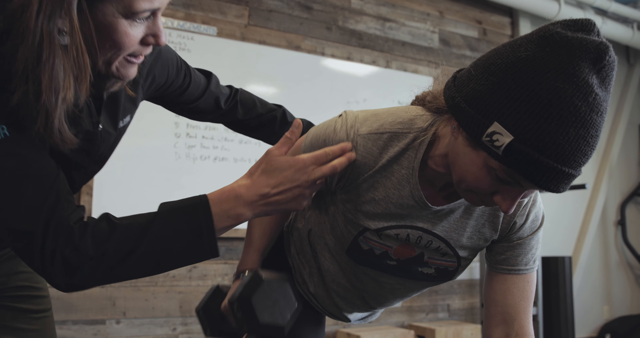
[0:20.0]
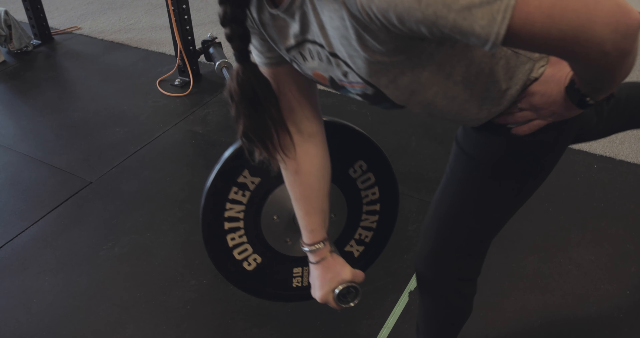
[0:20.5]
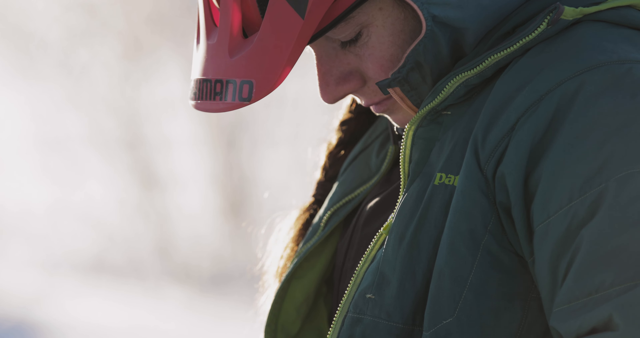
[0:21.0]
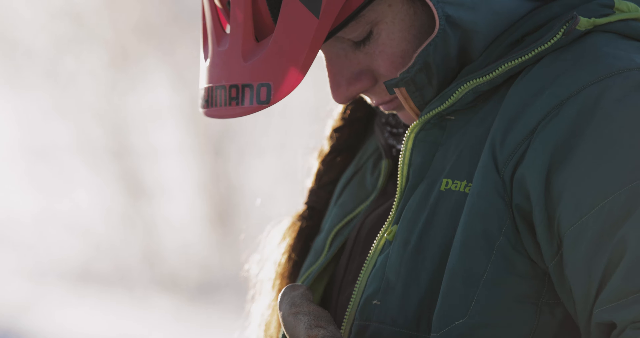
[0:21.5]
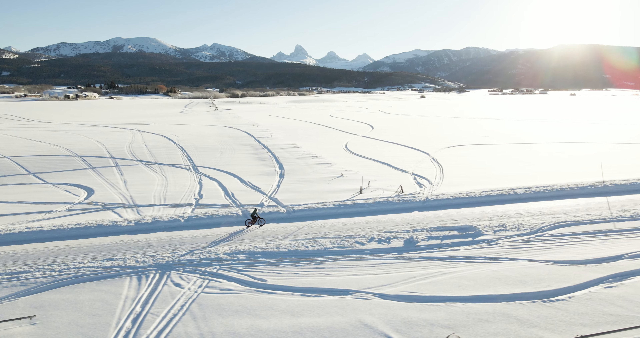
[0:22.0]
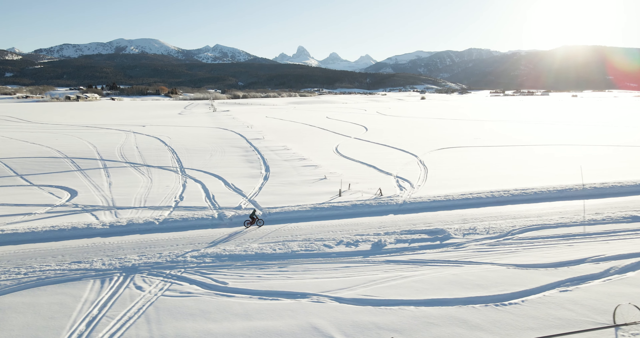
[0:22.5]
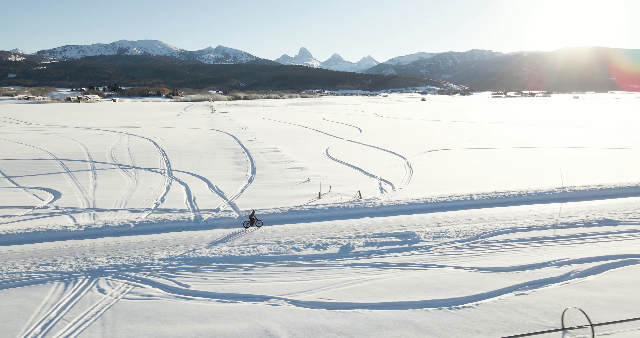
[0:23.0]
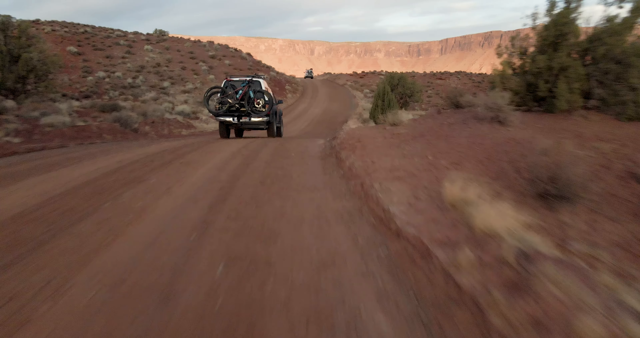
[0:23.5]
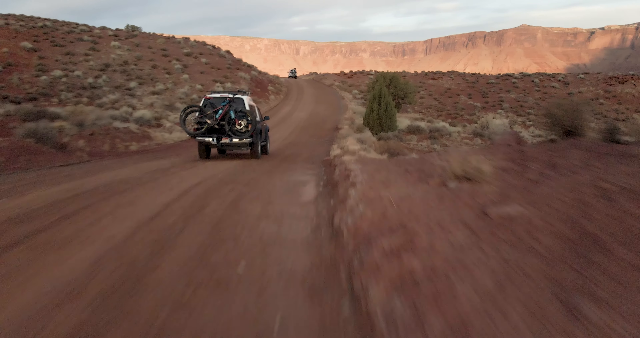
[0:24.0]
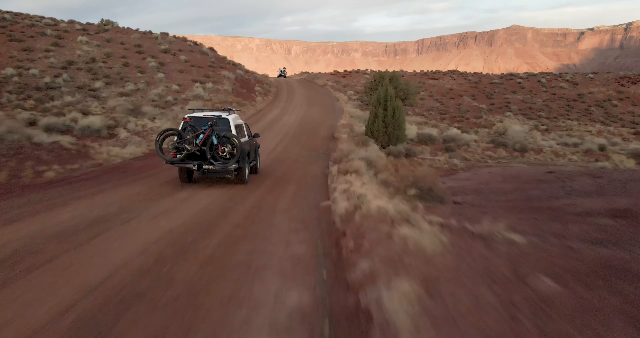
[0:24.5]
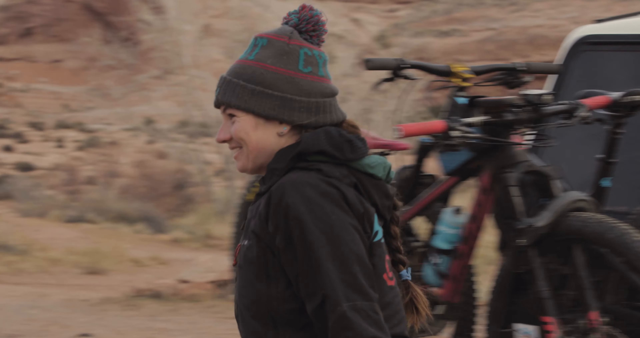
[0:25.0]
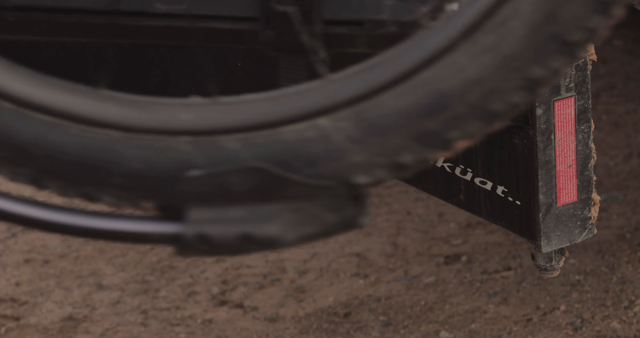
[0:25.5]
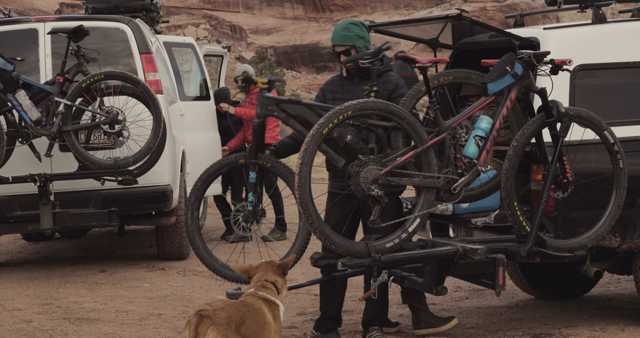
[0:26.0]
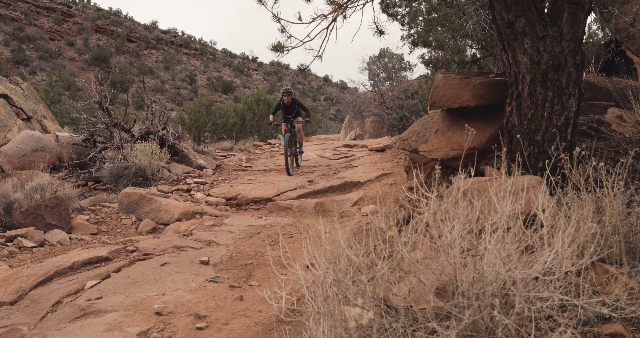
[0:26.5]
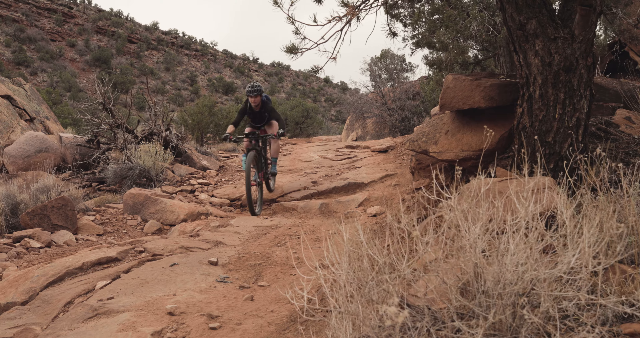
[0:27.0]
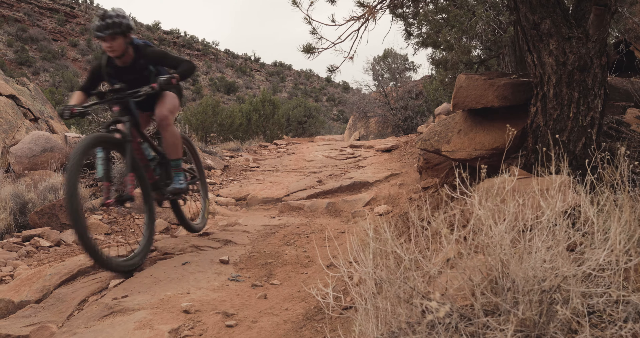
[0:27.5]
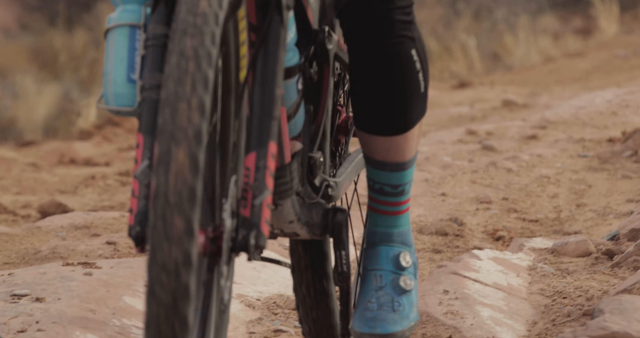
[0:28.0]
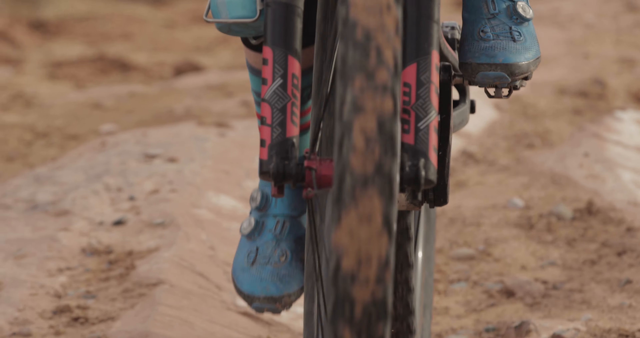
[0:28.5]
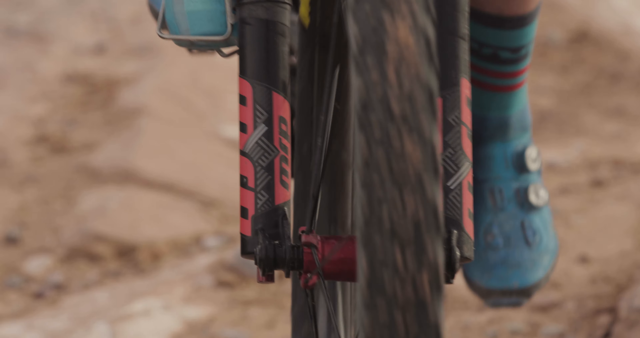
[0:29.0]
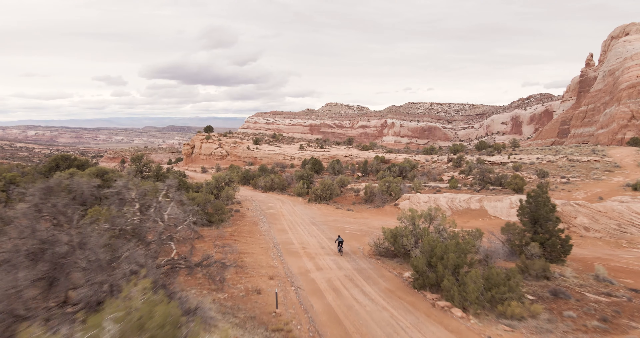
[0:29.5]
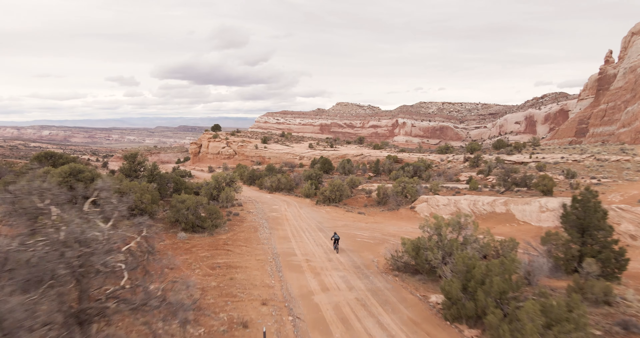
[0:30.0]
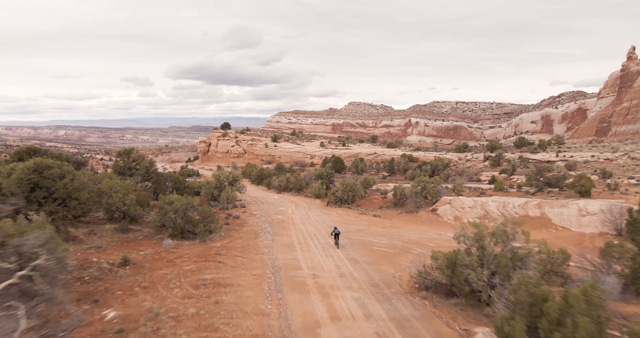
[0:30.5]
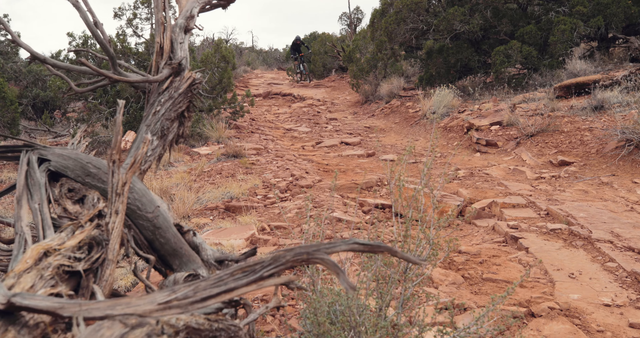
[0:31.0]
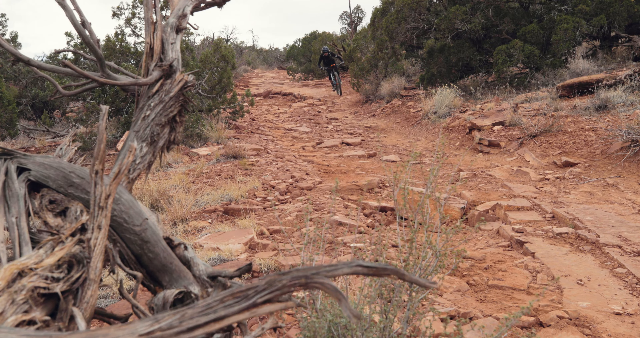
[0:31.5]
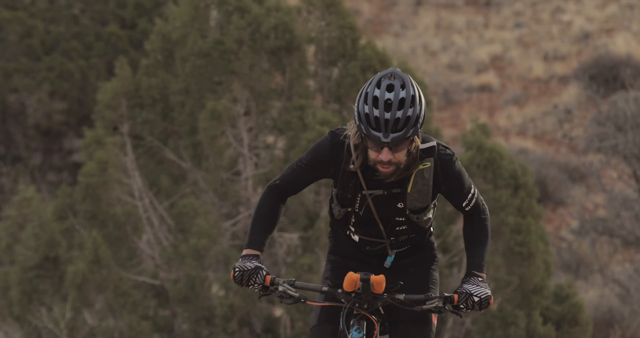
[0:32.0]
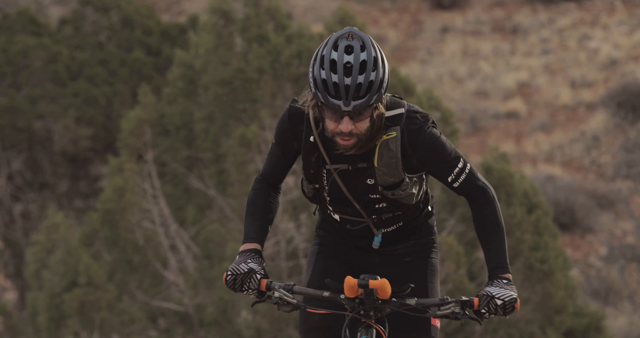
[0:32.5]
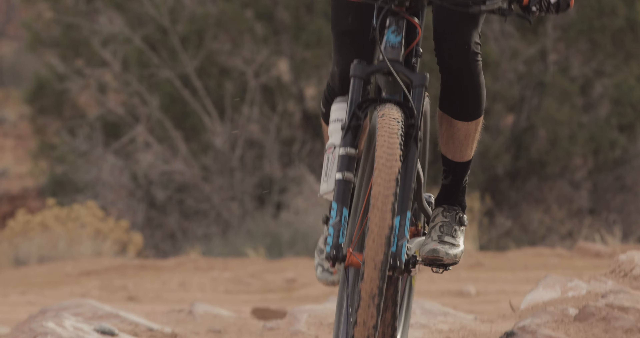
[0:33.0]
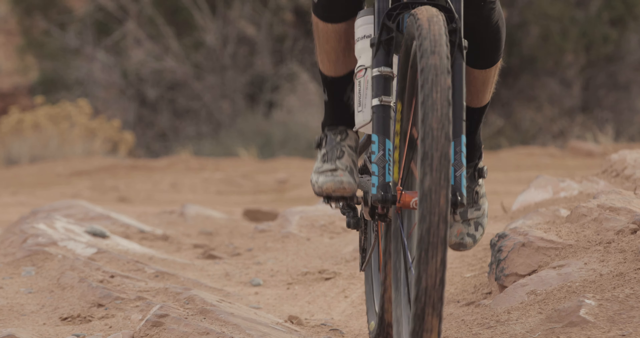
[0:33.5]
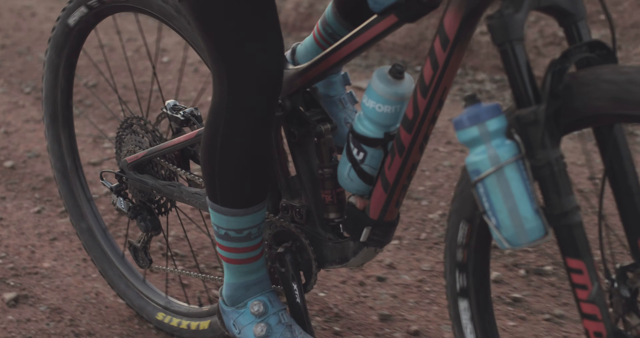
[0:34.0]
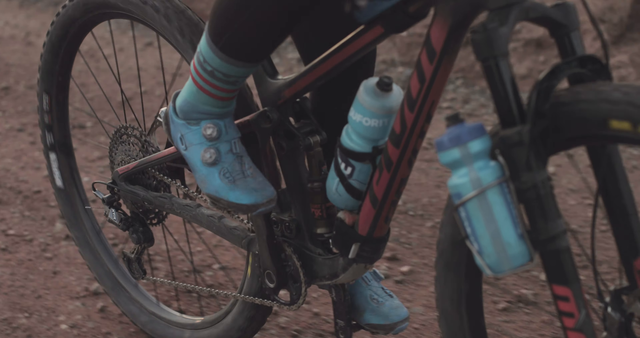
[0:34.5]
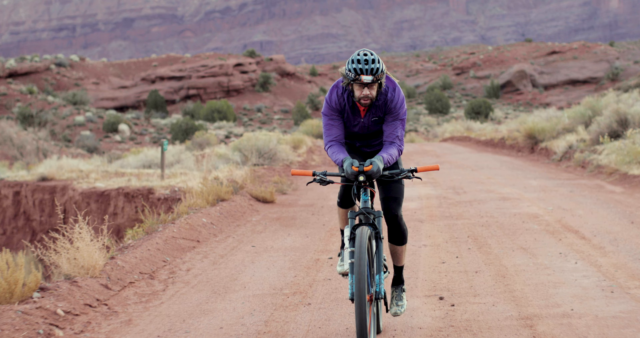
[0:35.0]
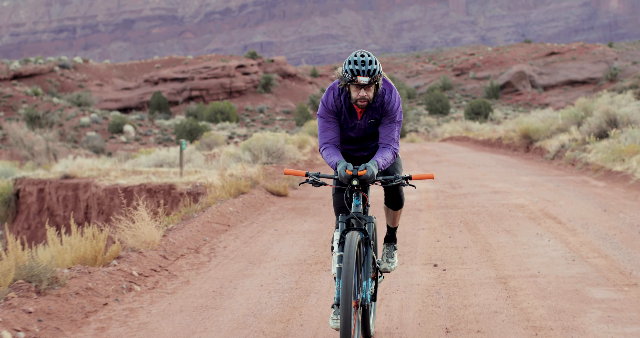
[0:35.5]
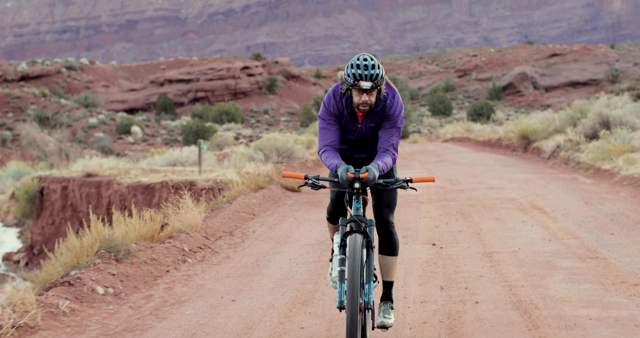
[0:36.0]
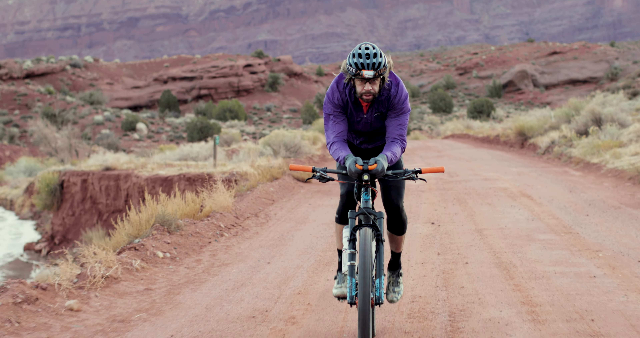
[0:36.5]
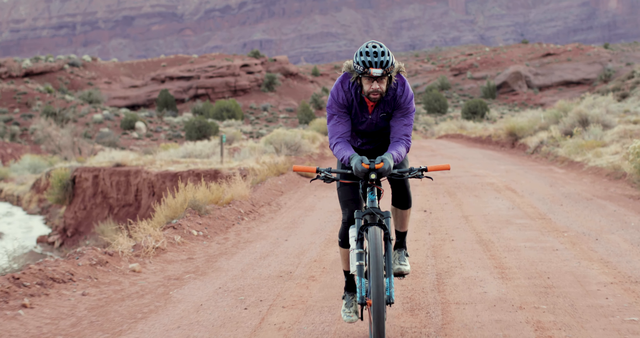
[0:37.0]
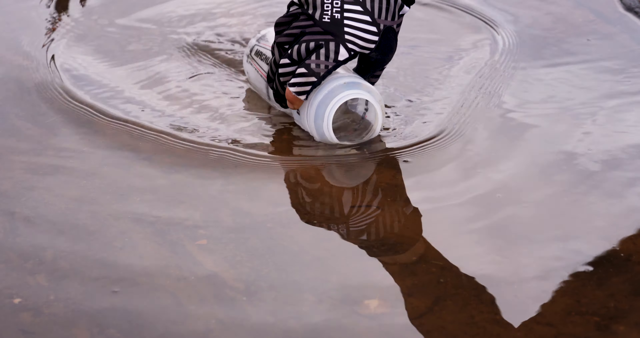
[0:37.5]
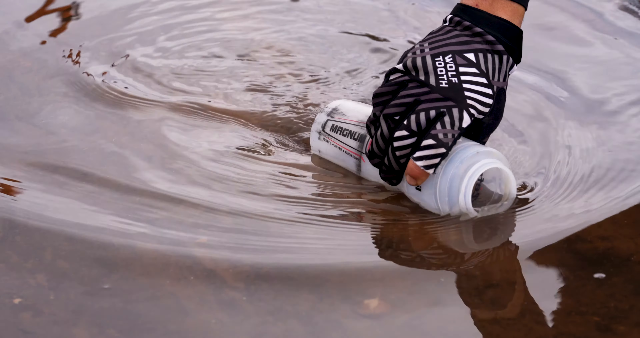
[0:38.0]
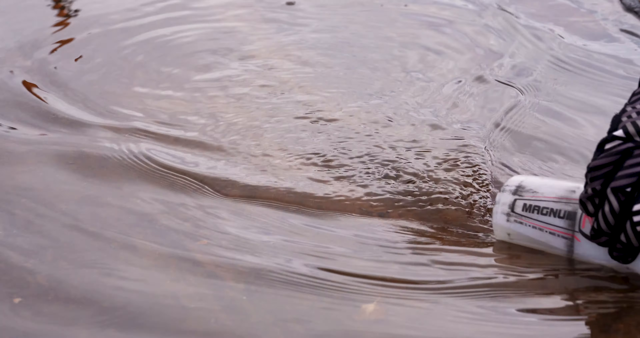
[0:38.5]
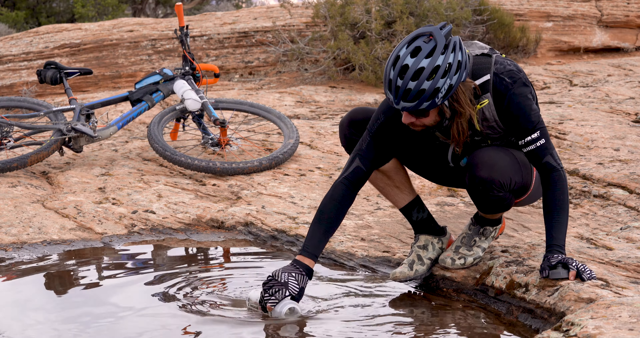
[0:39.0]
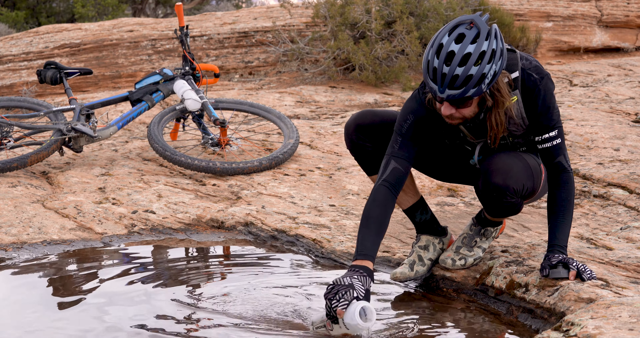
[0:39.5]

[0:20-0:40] A baby rides a cycle, and a man rides his cycle as well. A person then collects water from a pond with his bottle. Many cycles hang on the back side of a car, and people collect their cycles from it. The person seems to be training himself, possibly for physical well-being.